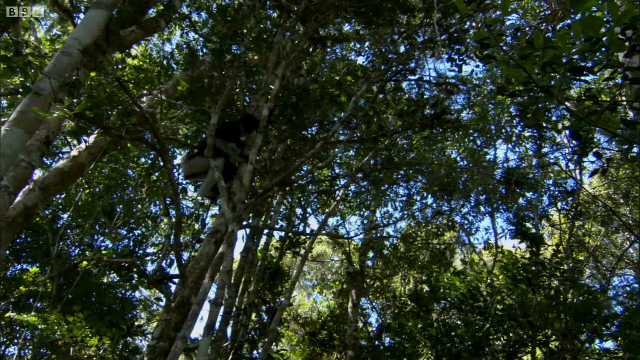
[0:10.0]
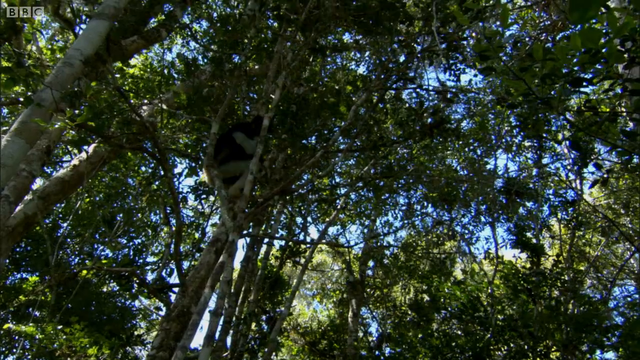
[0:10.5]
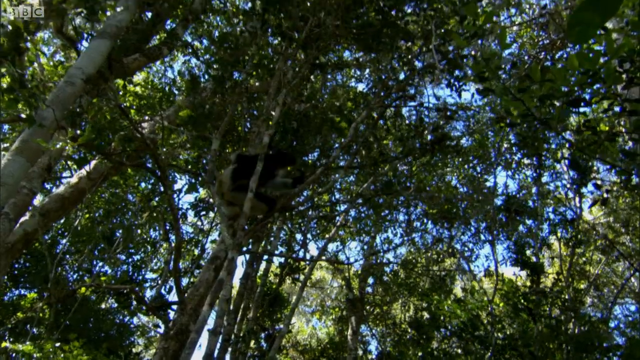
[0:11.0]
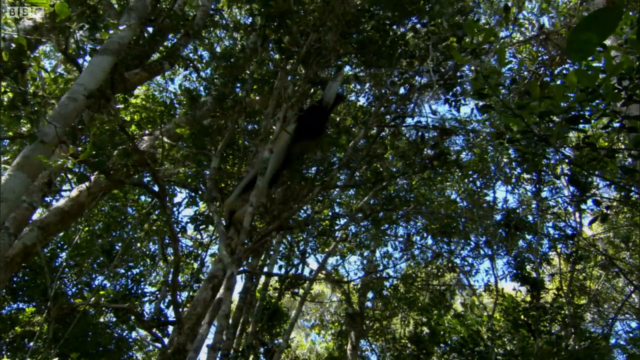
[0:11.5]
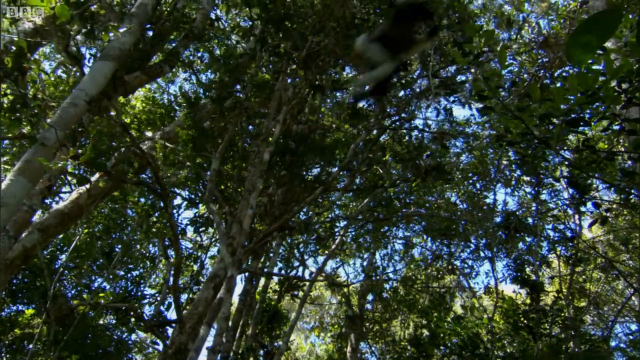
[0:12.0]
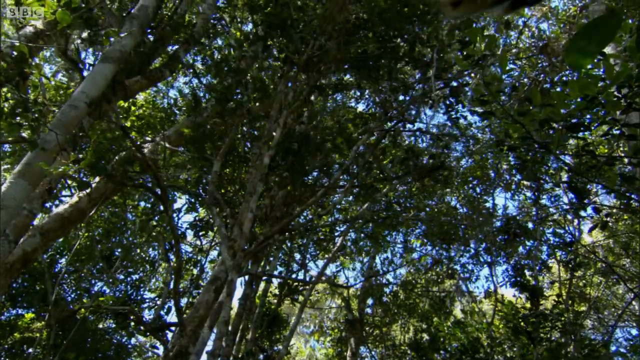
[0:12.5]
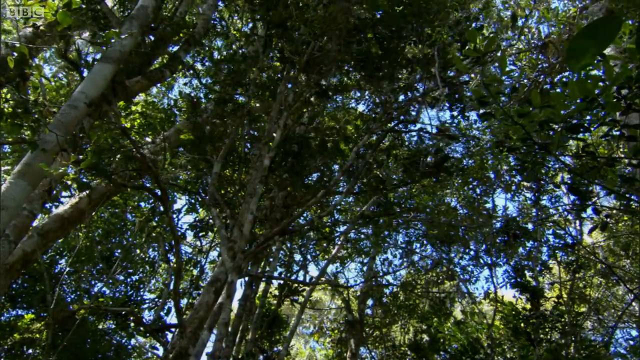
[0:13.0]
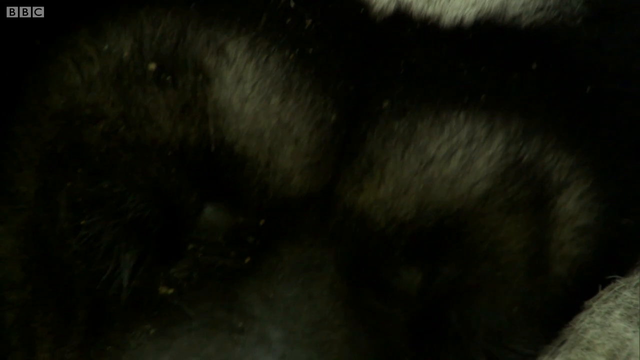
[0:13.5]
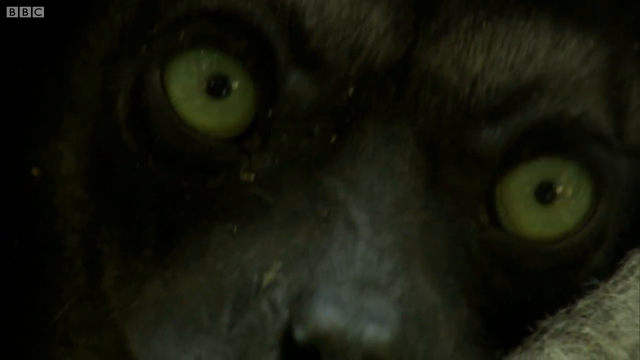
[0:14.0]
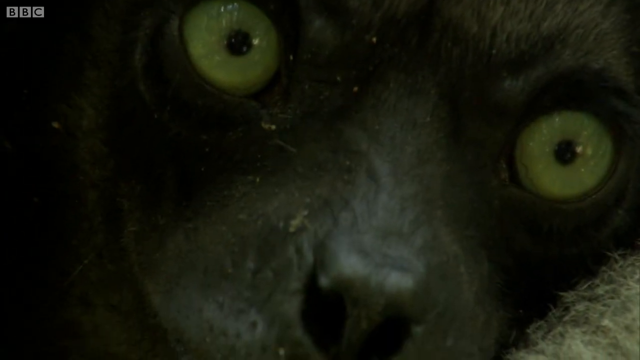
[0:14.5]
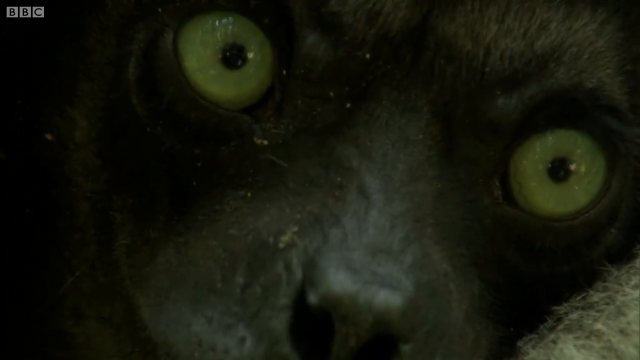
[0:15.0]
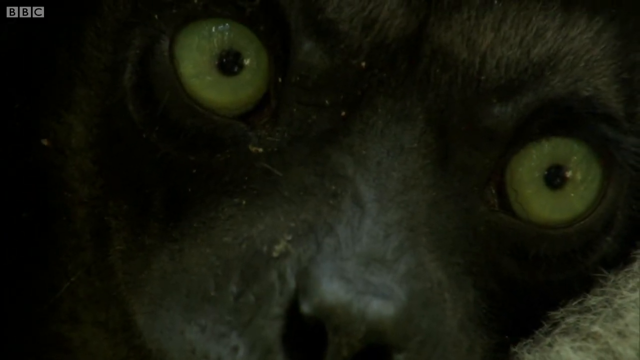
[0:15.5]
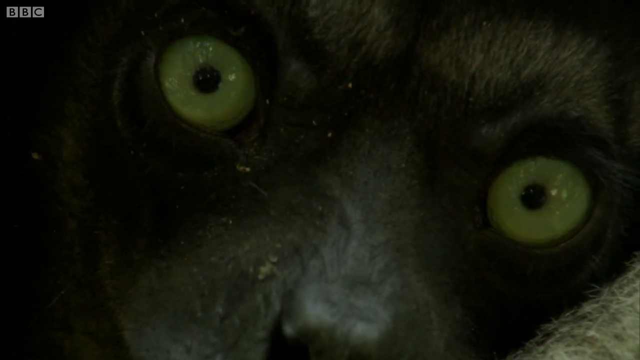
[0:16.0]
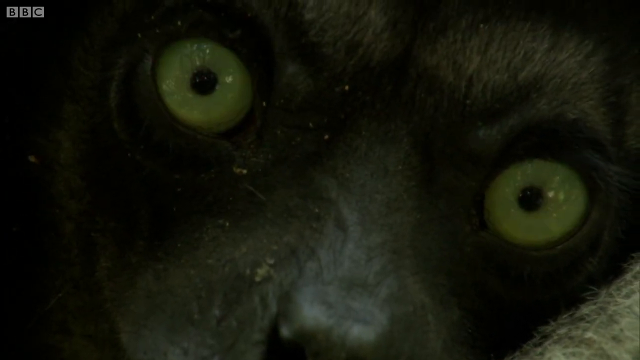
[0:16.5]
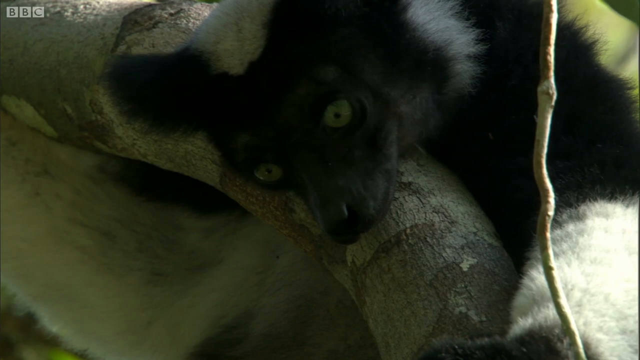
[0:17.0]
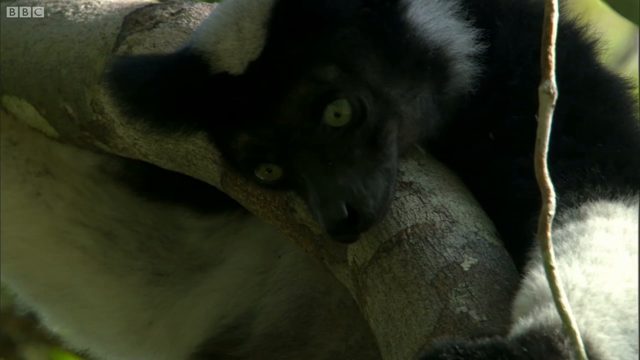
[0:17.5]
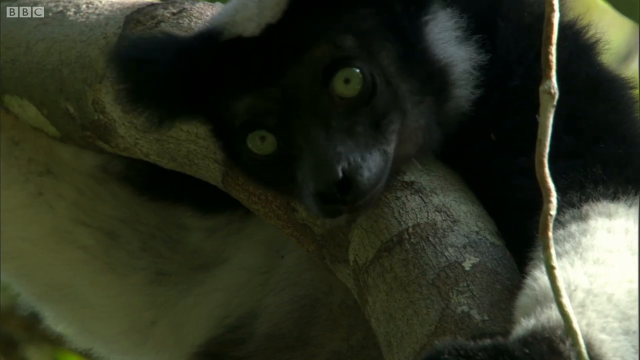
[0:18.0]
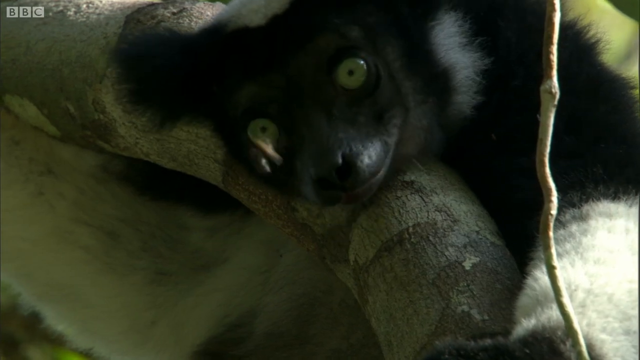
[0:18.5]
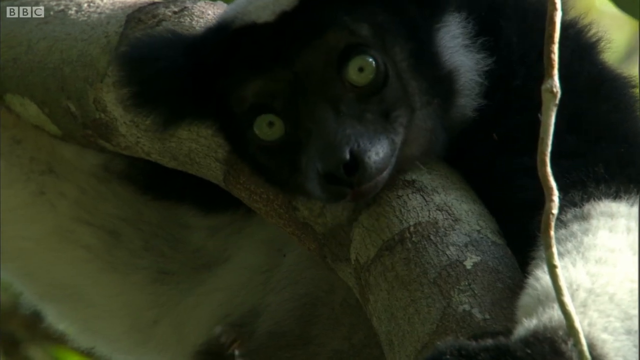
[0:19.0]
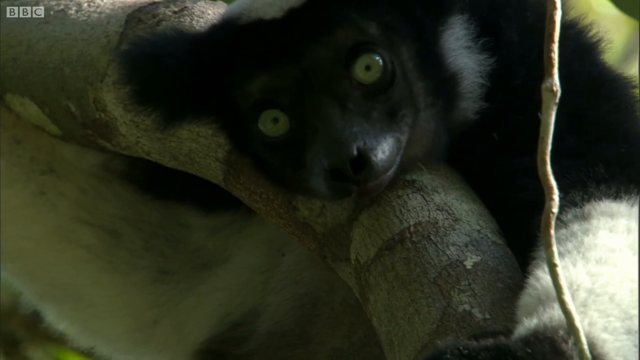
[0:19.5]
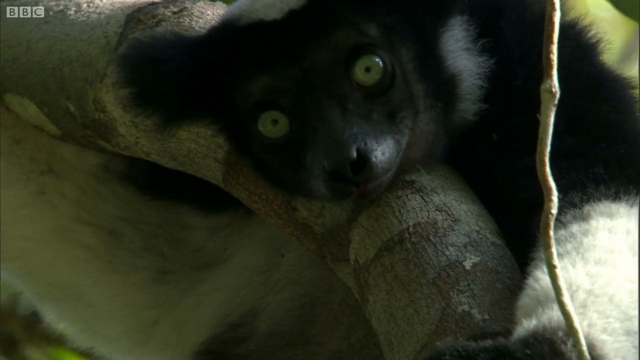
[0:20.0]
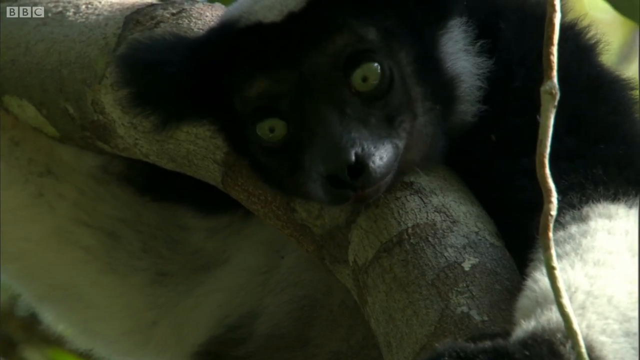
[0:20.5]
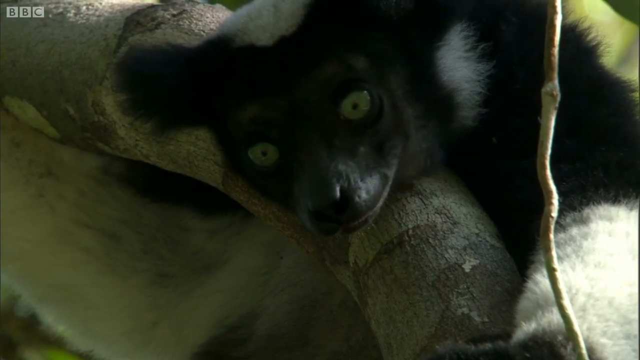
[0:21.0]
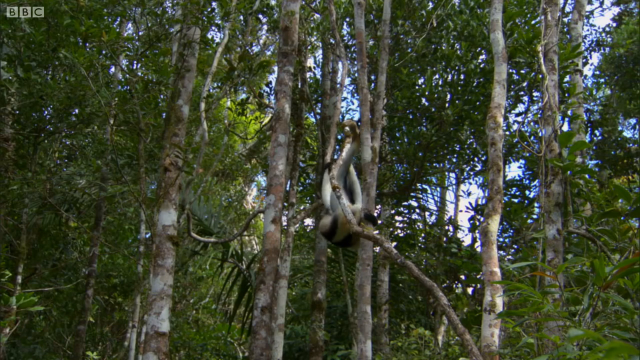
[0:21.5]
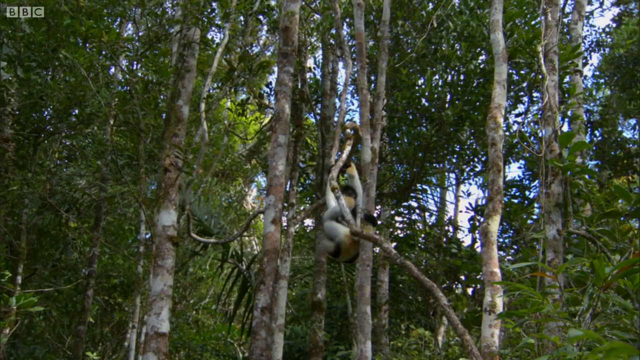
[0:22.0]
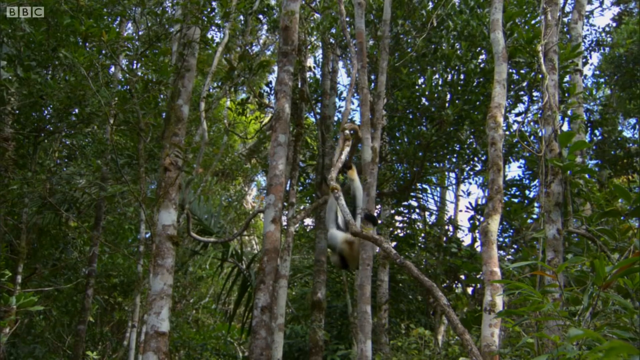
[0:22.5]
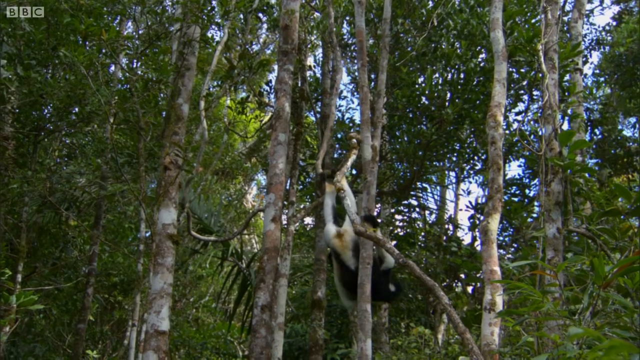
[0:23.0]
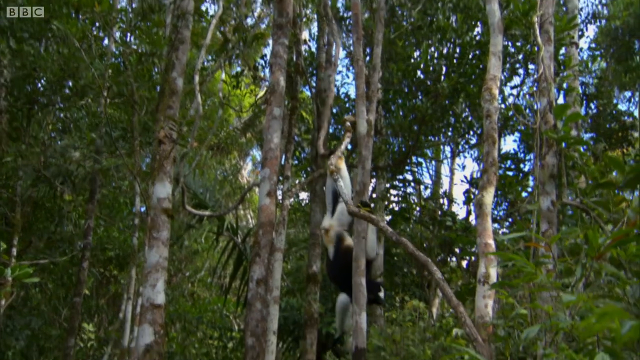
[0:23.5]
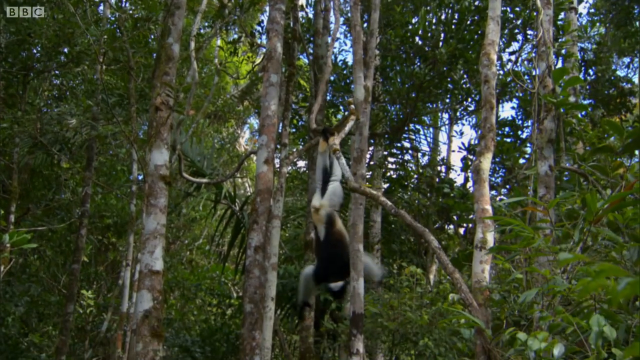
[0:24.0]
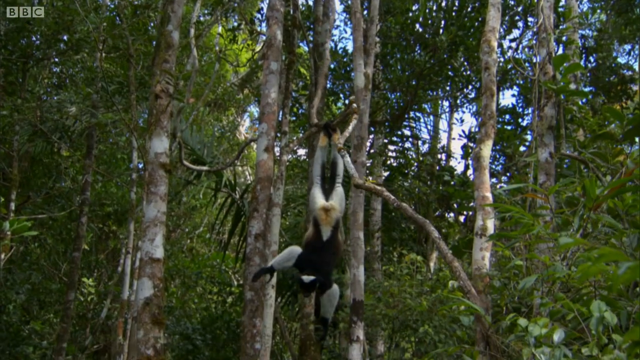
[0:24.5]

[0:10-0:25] The lemur climbs a tree, shimmying up the trunk, then leaps off into the branches. A close-up shows the lemur and its green eyes. The camera pans back out, showing the lemur jumping, hanging upside down, almost climbing the tree upside down, and then hanging from a vine by its feet. At one point a flying insect appears and the lemur's eyes follow it. The trees are very green and densely packed, with blue sky in the background and sunlight streaming through the trees.